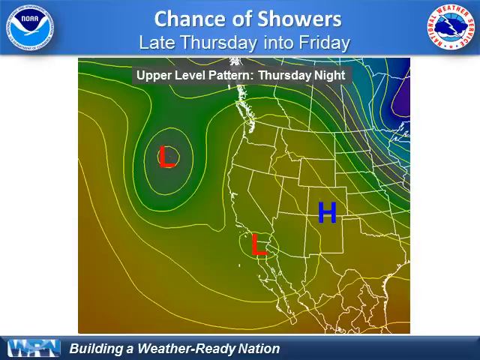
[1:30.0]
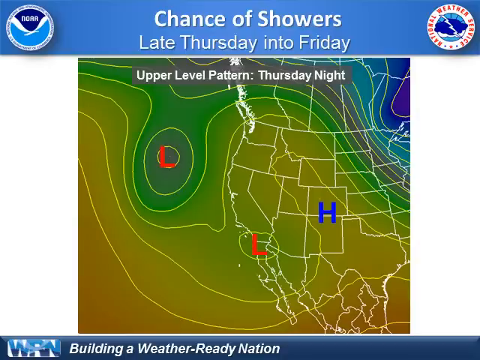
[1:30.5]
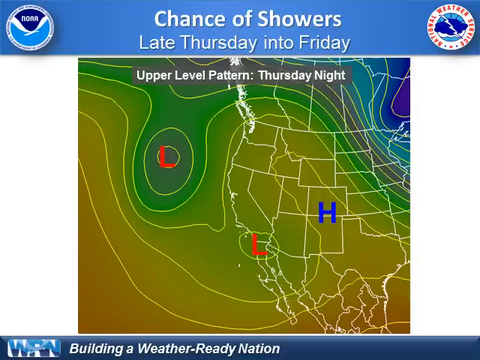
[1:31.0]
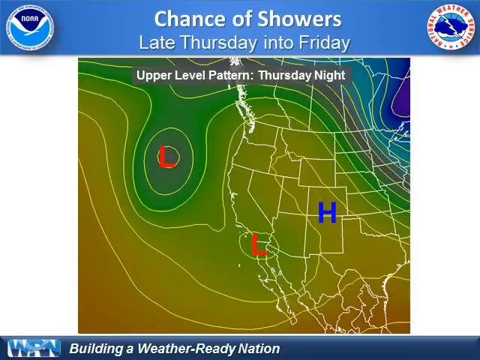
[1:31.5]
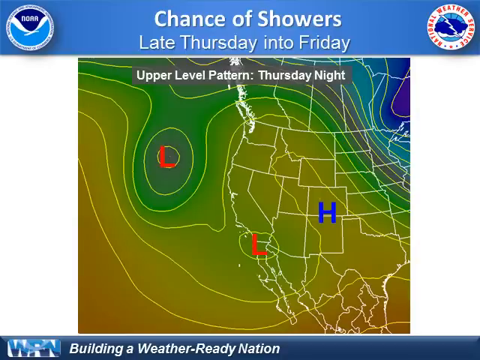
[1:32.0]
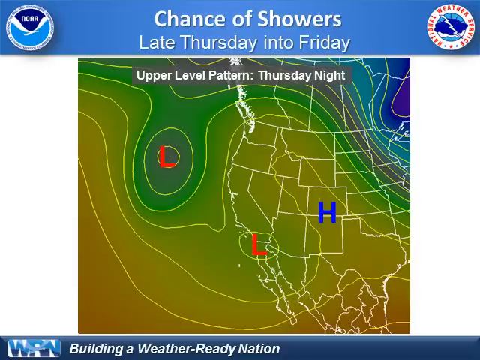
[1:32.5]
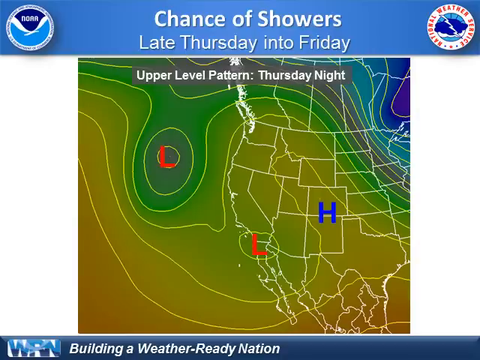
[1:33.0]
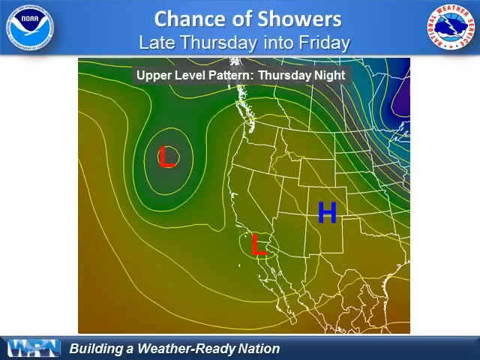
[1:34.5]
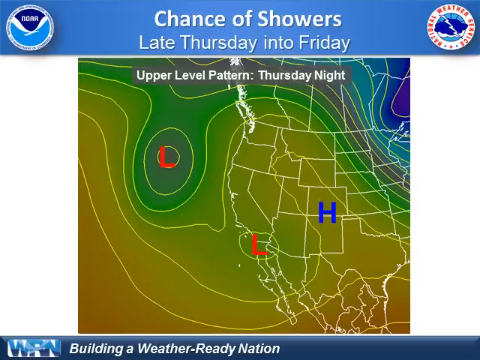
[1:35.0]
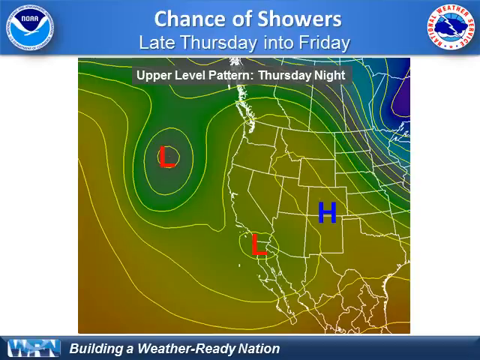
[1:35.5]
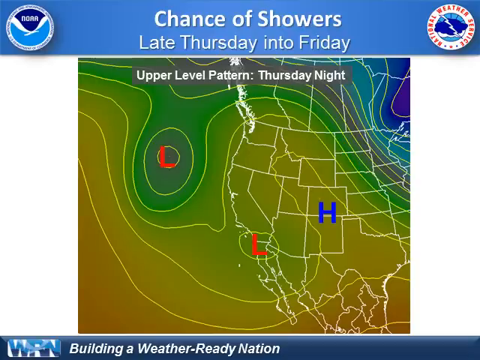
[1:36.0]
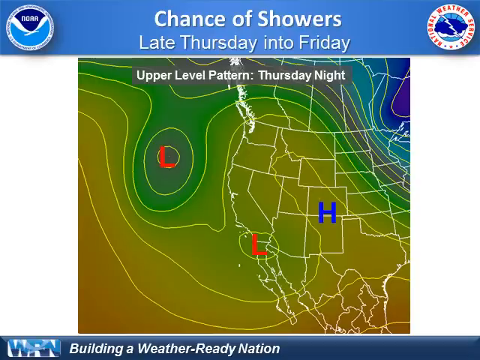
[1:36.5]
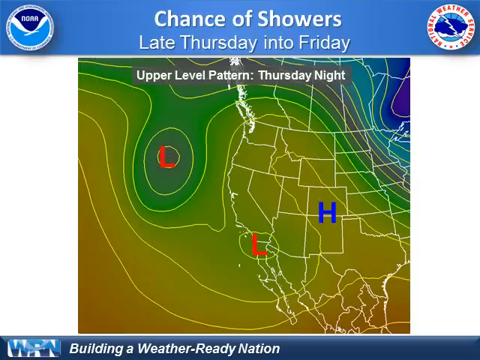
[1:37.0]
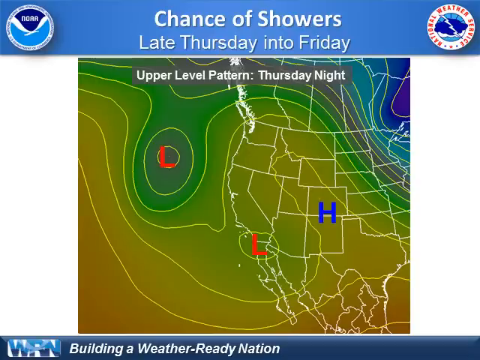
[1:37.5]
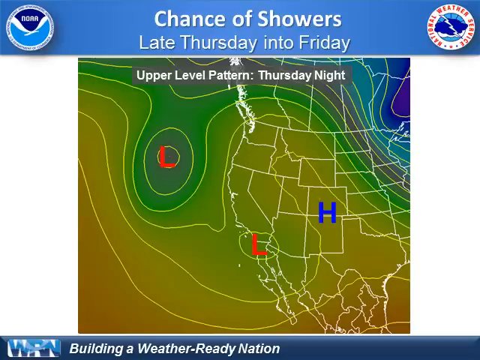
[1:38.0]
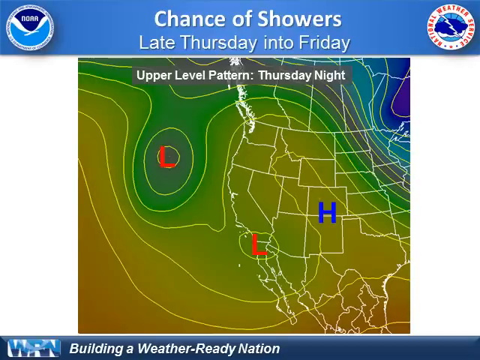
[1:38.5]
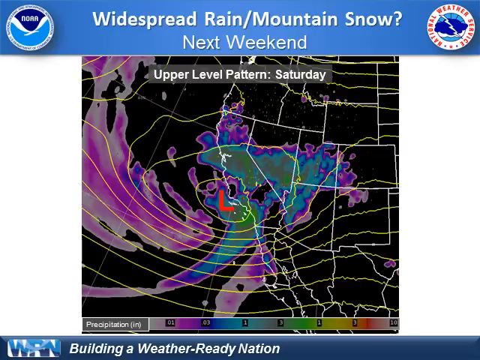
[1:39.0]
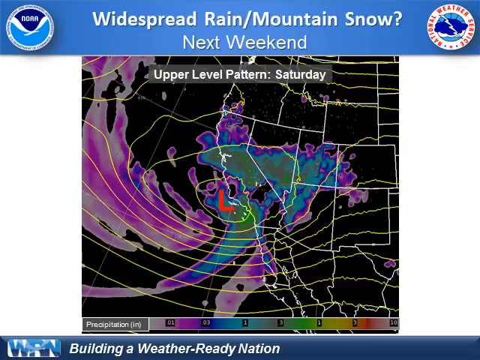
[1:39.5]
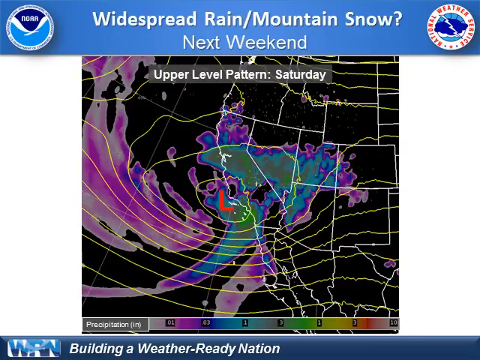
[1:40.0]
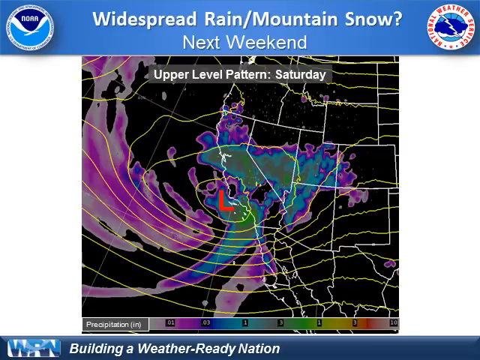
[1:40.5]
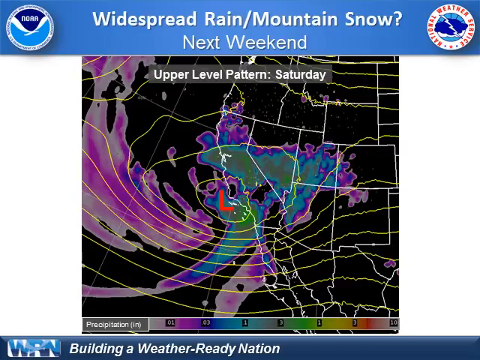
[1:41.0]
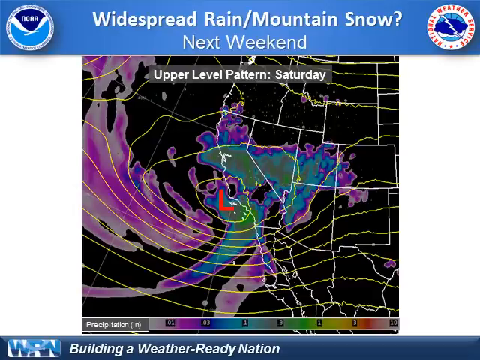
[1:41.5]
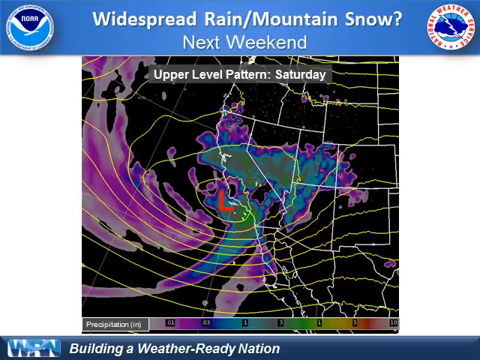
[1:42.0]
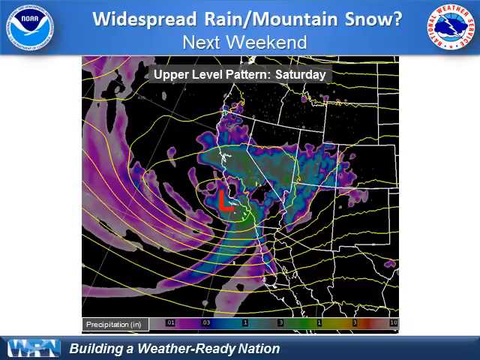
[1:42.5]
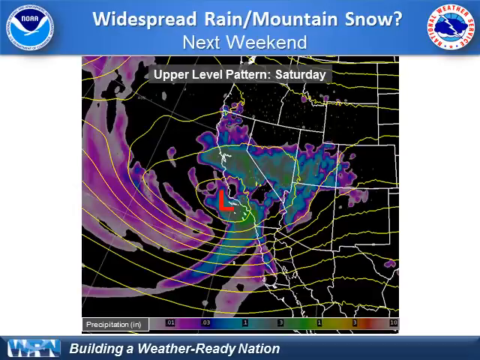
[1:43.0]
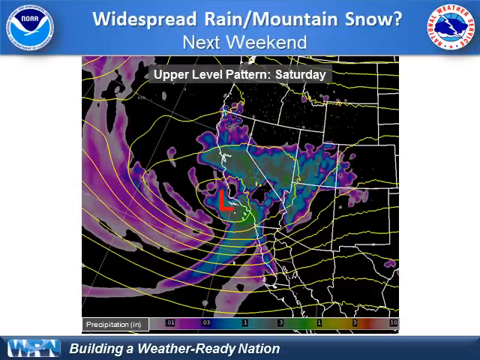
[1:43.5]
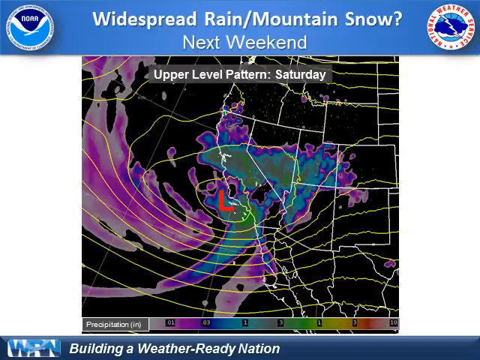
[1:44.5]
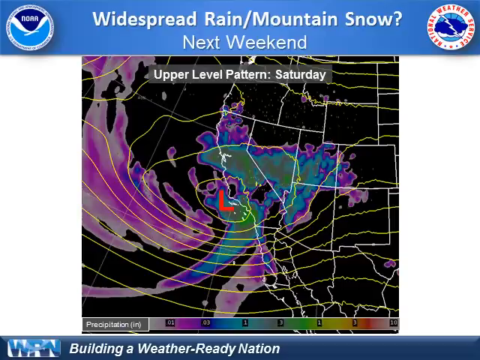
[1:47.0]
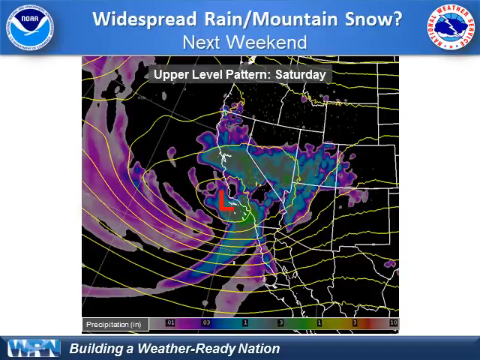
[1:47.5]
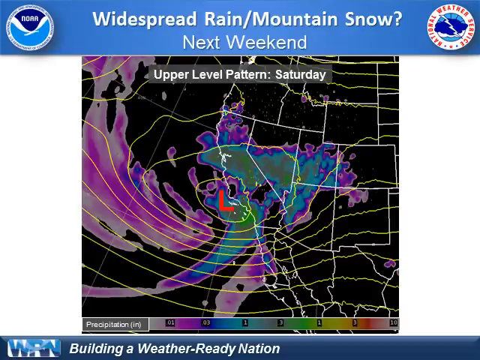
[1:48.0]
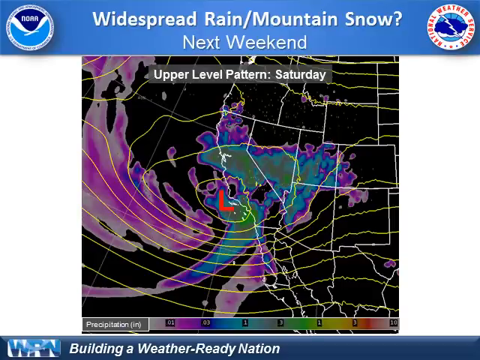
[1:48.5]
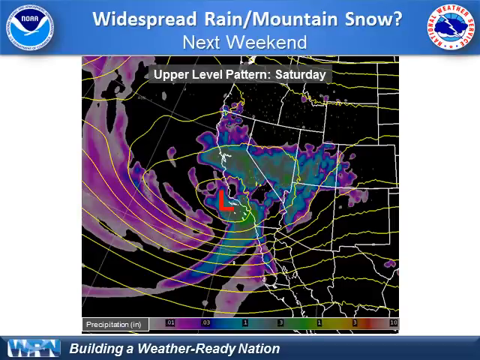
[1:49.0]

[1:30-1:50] A weather map of the western half of the United States shows two lows: one at the Baja California and California border, and another out in the ocean from Oregon. A high pressure, marked with a blue H several states over, is being pushed across the United States. The title says "chance of showers late Thursday into Friday", and below that it says "upper level pattern Thursday night". The high pressure is being pushed across the Four Corners and out towards Oklahoma and Kansas. A new map comes up showing a different version, saying "widespread rain and mountain snow? next weekend" and "upper level pattern, Saturday". It shows the second low pressure coming across, getting ready to hit southern and central California, with a lot of weather in its wake.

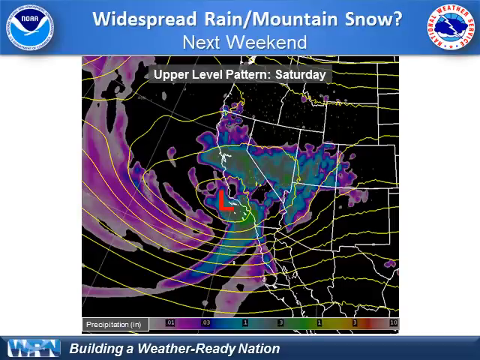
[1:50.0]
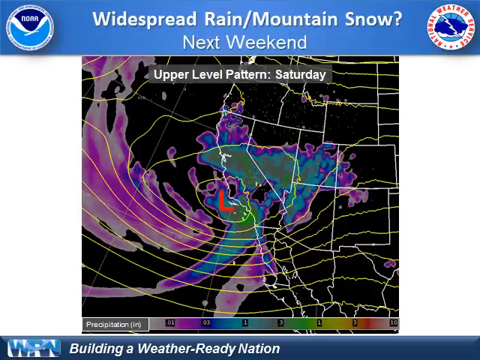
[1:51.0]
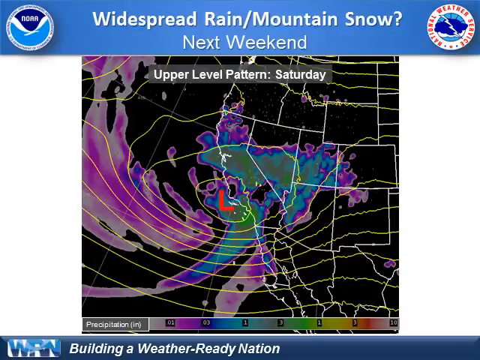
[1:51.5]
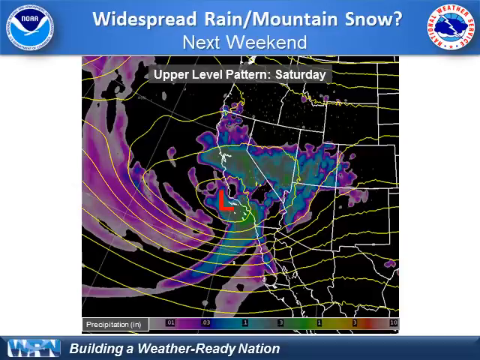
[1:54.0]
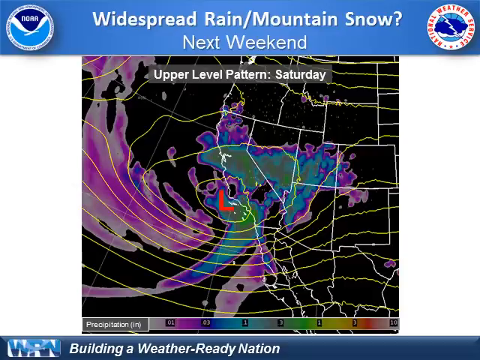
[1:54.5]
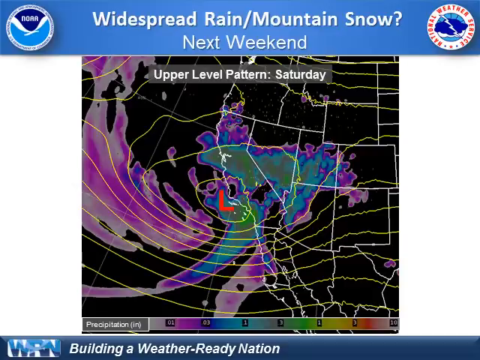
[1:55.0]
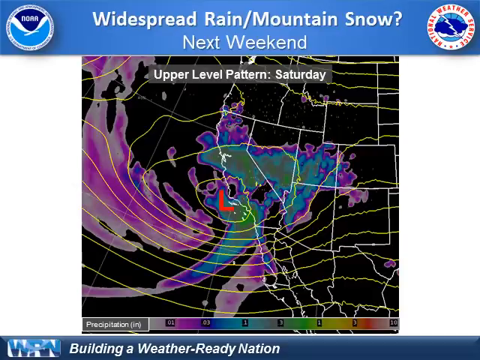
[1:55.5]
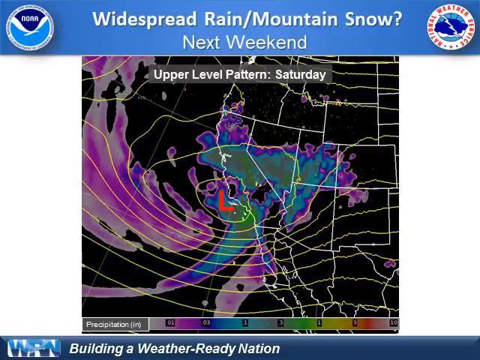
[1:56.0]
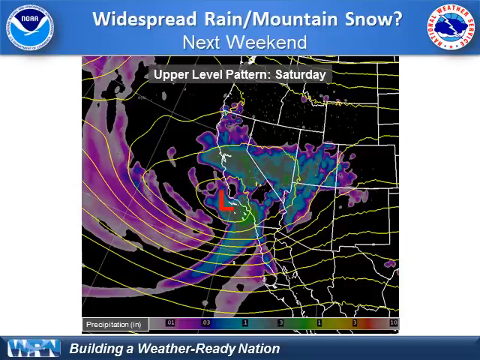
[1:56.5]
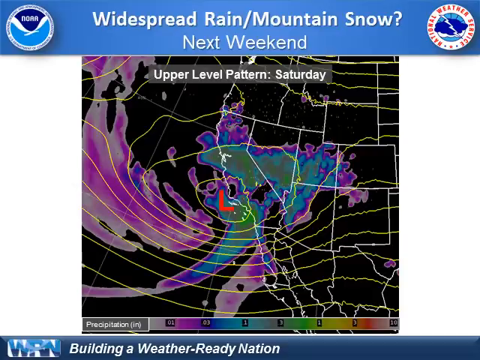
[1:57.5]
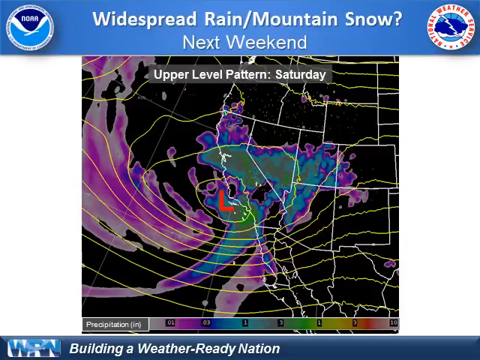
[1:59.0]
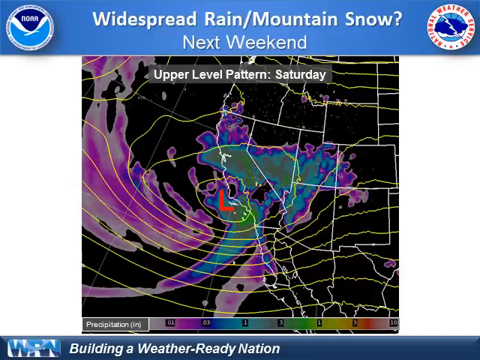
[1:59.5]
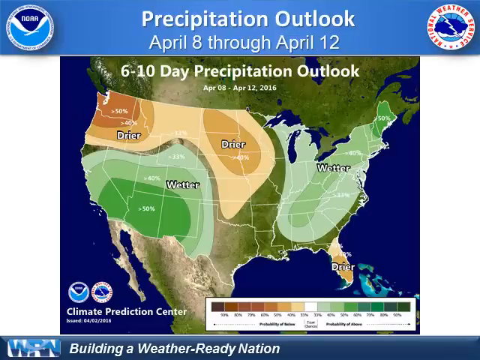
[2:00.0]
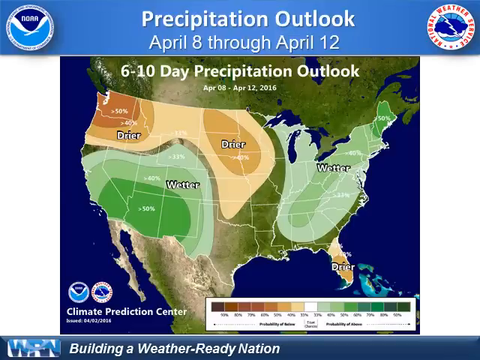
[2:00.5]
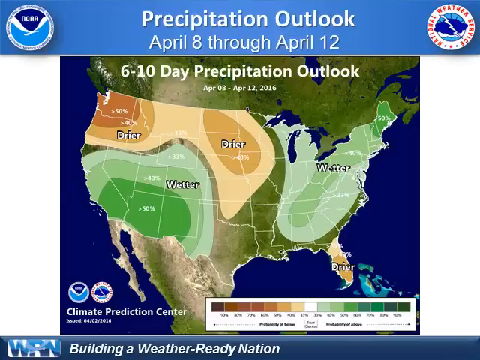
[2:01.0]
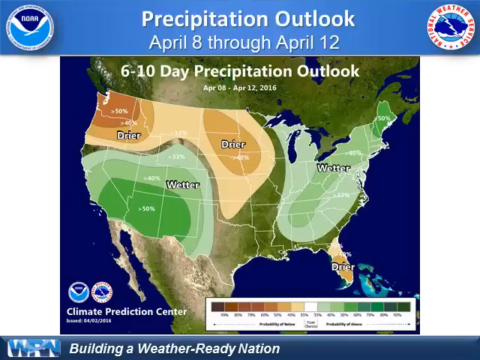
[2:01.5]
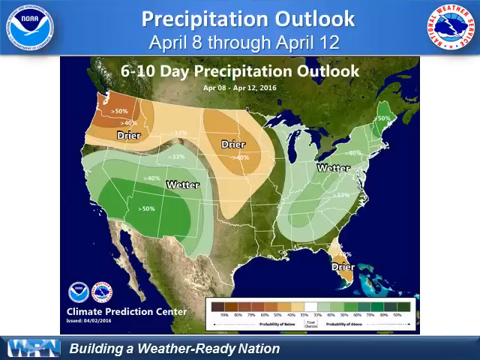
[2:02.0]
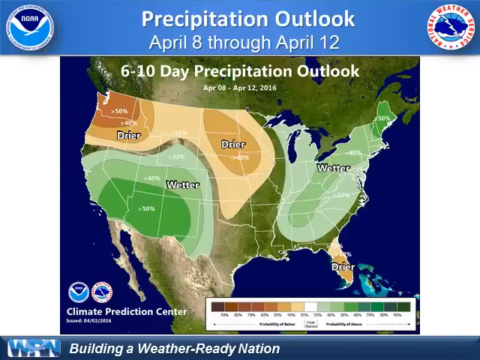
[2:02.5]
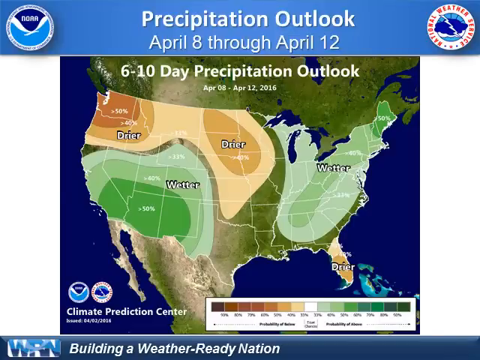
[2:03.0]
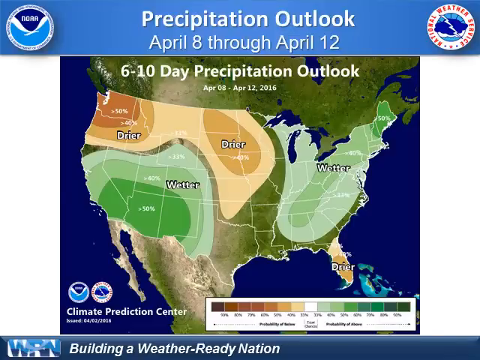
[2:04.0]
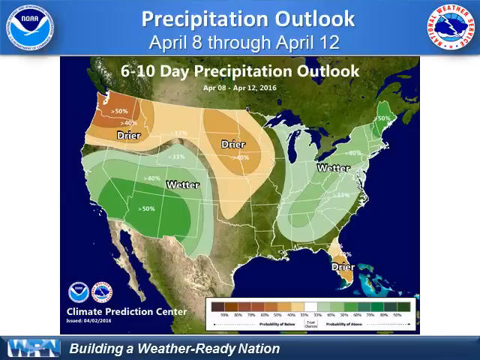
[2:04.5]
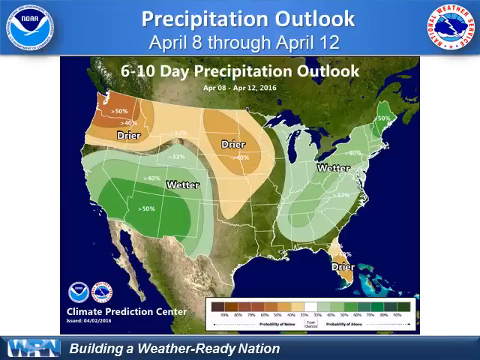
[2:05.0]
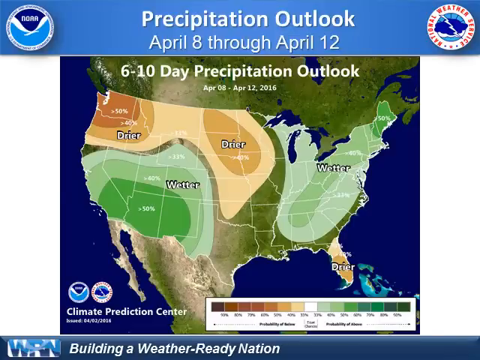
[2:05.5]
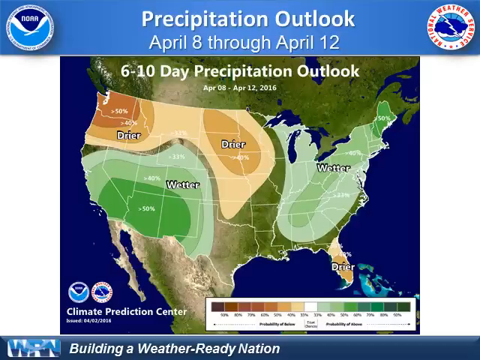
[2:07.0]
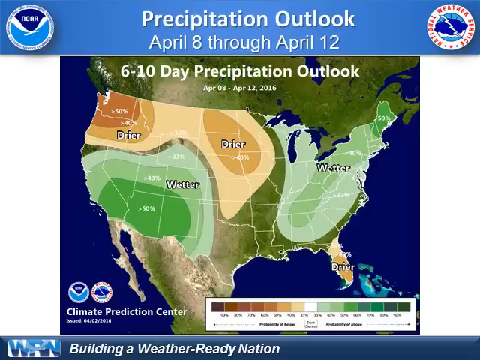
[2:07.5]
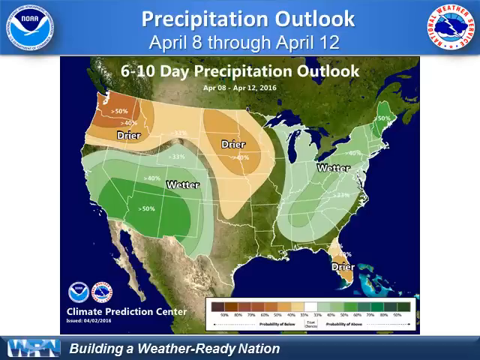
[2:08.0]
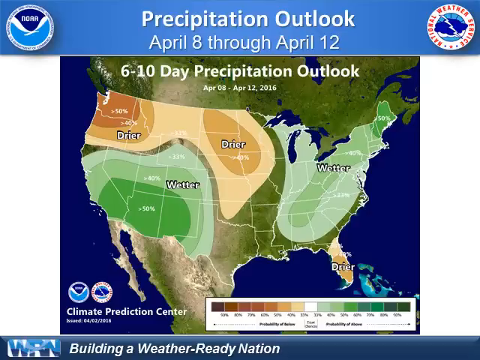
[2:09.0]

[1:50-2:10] A weather map has the National Weather Service name and logo in the right-hand corner, a dark cloud over a light cloud with white lightning, and the NOAA logo on the left. At the top it says "widespread rain, mountain snow? next weekend", and below that "upper level pattern, Saturday". The map of the western United States and the Pacific Ocean shows a low pressure off the shore of central California, with its various levels spreading out and a lot of precipitation coming with it, shown in a lot of purple, blue, and green that represent the pressure and the coming precipitation. Another map is then overlaid showing the contiguous lower 48 US states. The top says "precipitation outlook, April 8 through April 12", below that "6 to 10-day precipitation outlook", and below that "April 8 through April 12, 2016". The map shows drier and wetter areas: the northwestern states and the north-middle states near Wisconsin and the Dakotas, extending down to the center, are drier, as is the southern tip of Florida. The western southern states and most of the East Coast are wetter. The map is from the Climate Prediction Center, there is text in the lower left, and a key at the bottom shows wetter in green and drier in brown.